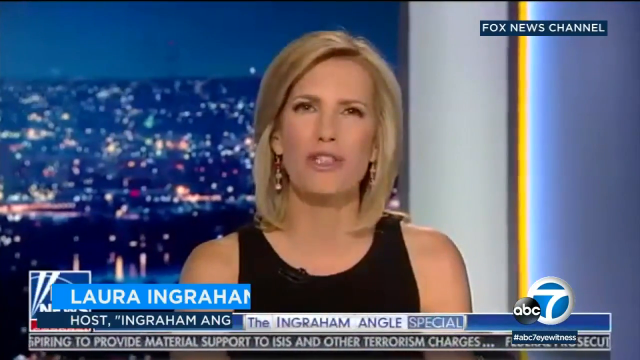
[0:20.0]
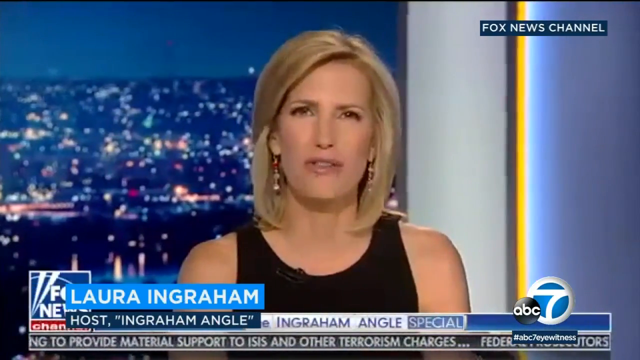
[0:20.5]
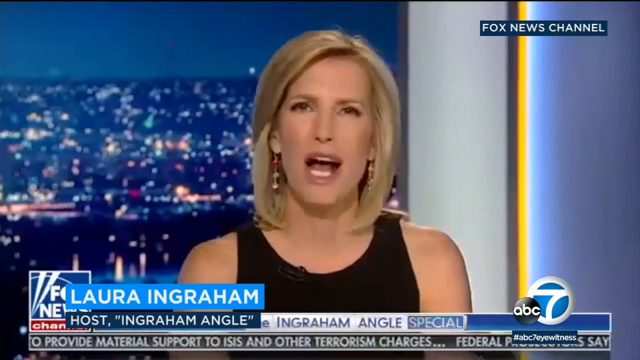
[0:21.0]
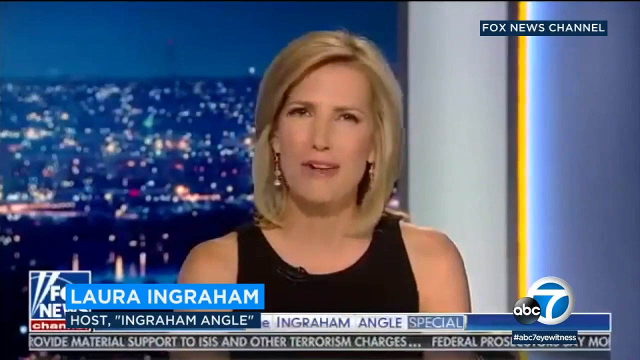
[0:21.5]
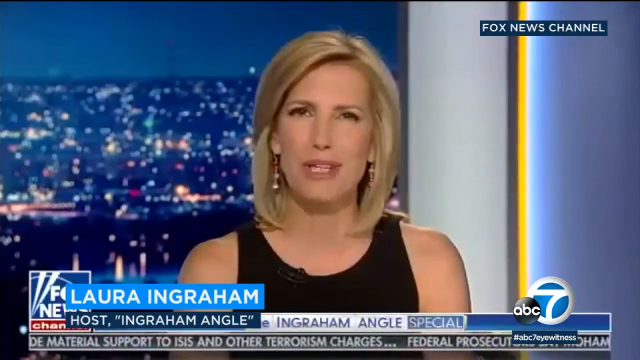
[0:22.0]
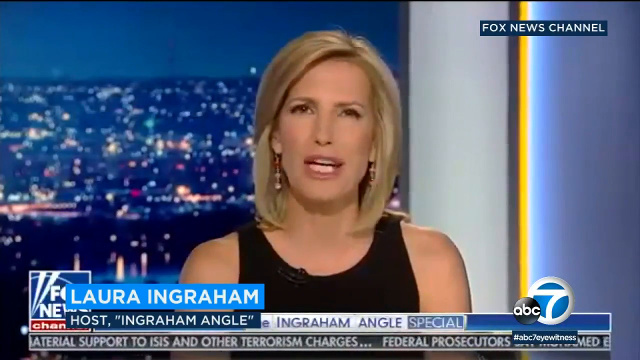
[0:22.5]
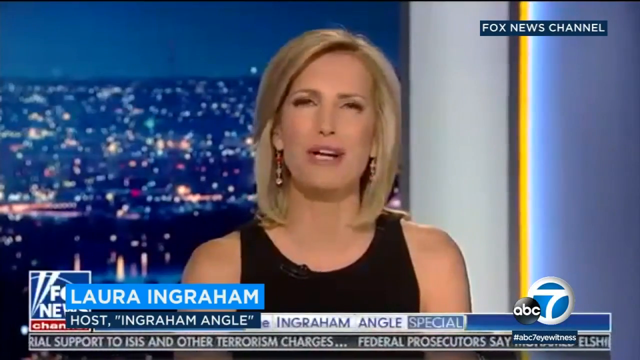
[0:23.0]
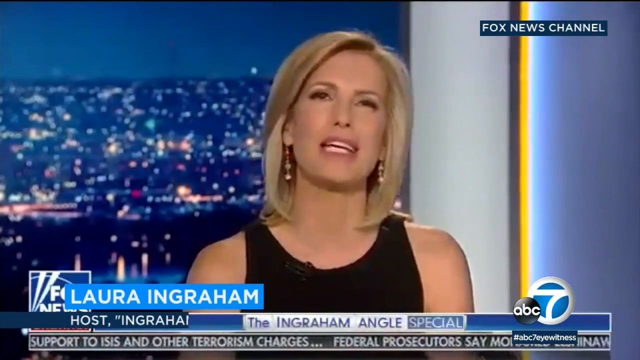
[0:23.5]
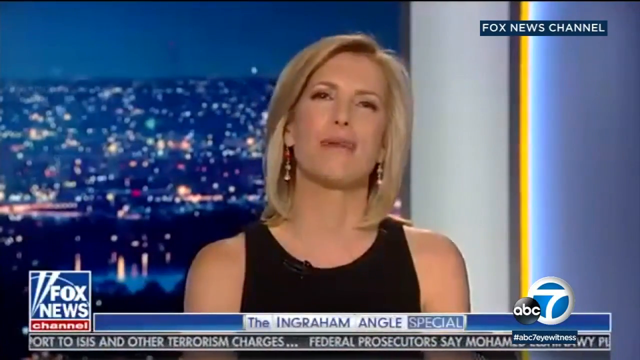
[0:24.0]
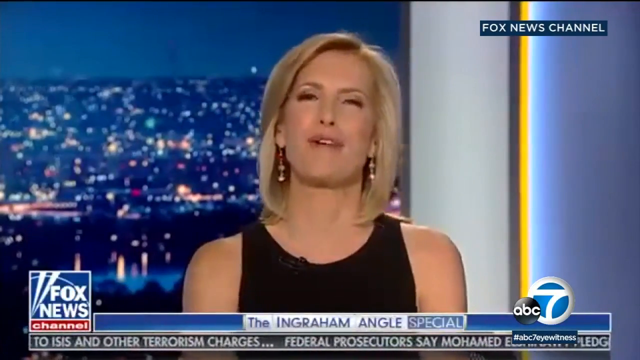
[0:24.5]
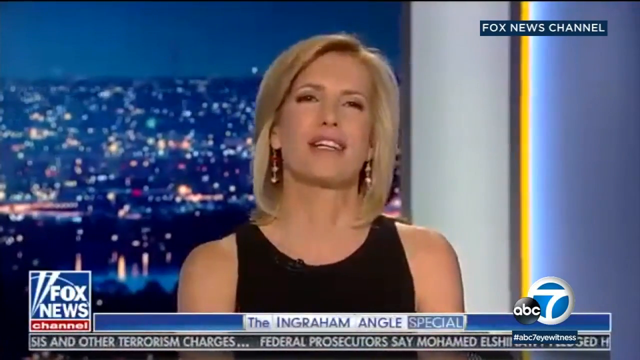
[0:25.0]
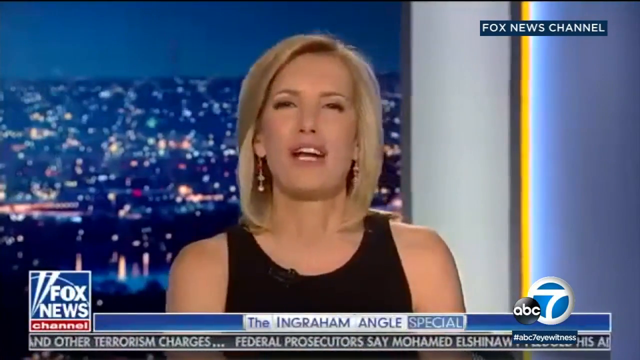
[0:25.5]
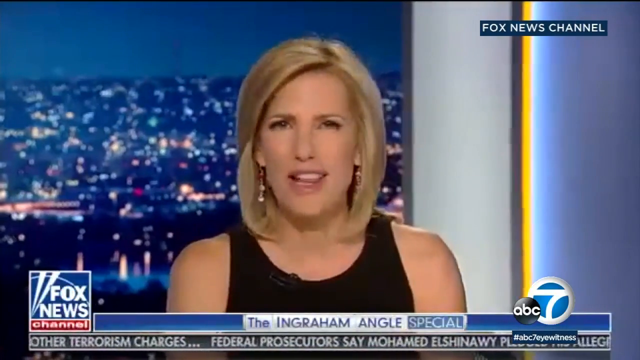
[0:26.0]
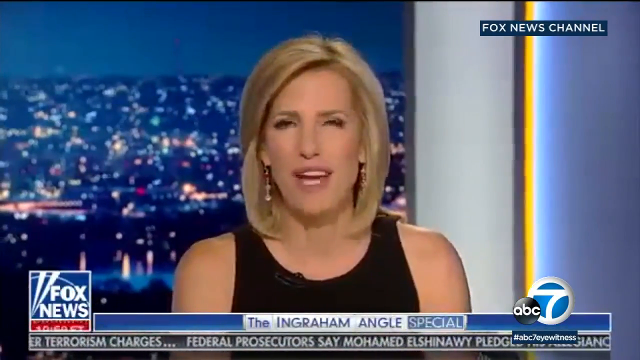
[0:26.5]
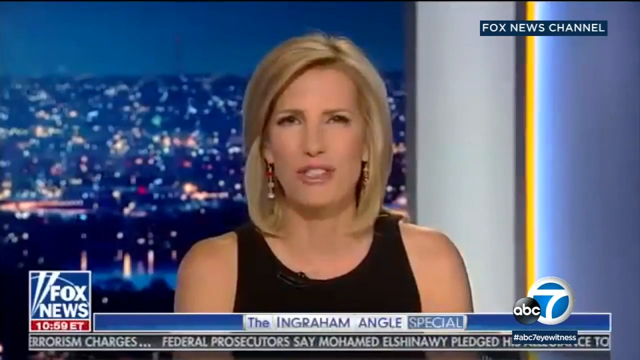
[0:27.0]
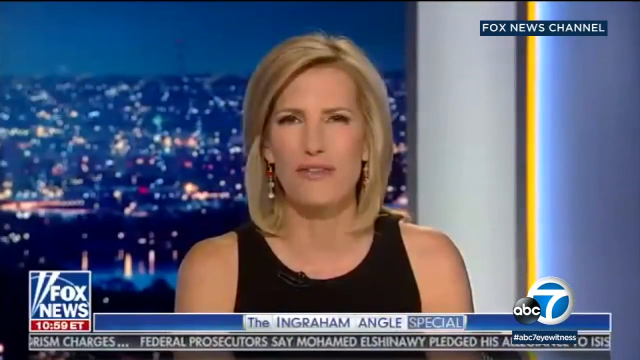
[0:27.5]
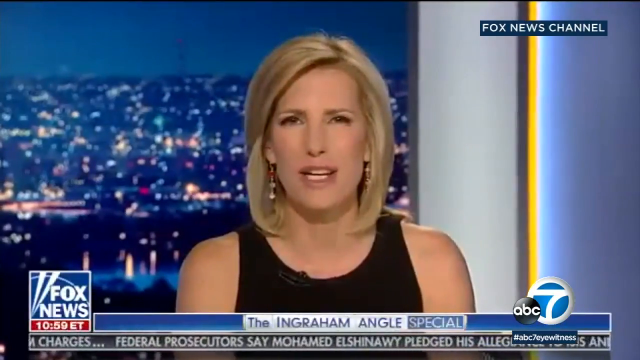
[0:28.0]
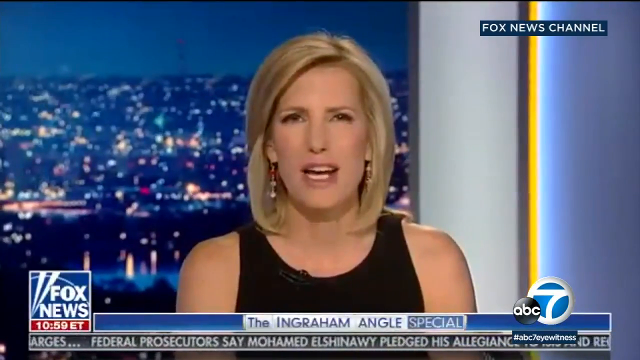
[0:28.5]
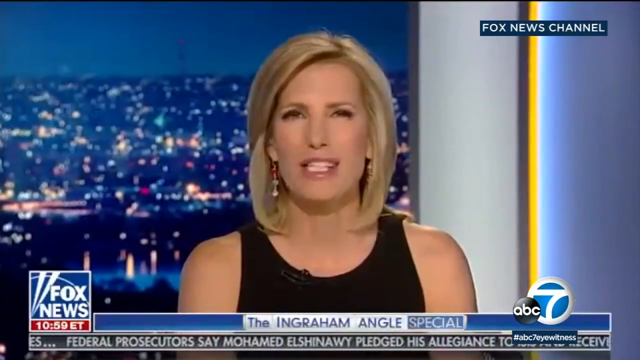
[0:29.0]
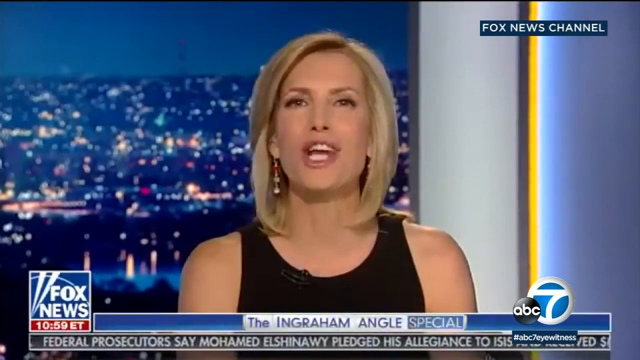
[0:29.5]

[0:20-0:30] A woman in a black dress with blonde hair sits on a chair. She is Laura Ingraham, the host, presenting on the Fox News Channel. There is a big TV screen, and it looks like it is night. On her left-hand side there is a long yellow pipe. She looks about 32 years old, is white, and wears earrings. She is reporting the news on TV.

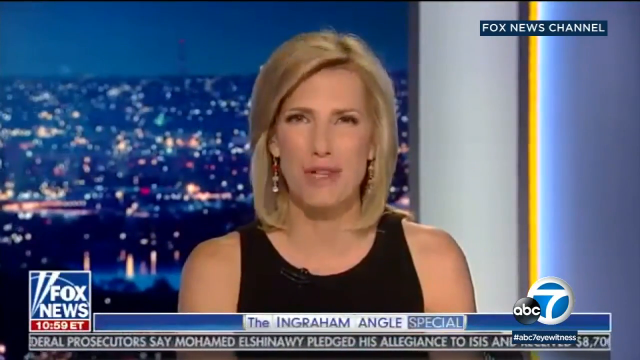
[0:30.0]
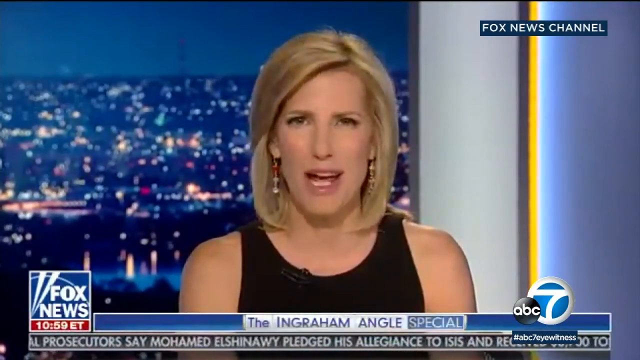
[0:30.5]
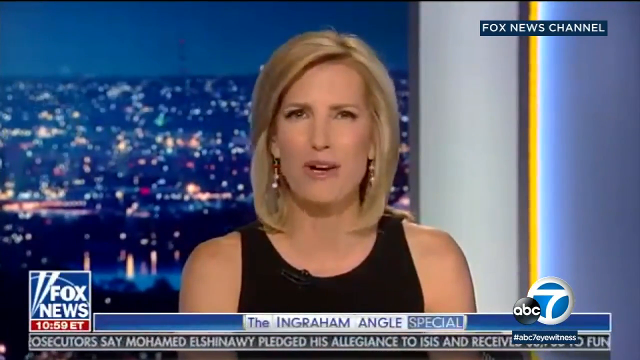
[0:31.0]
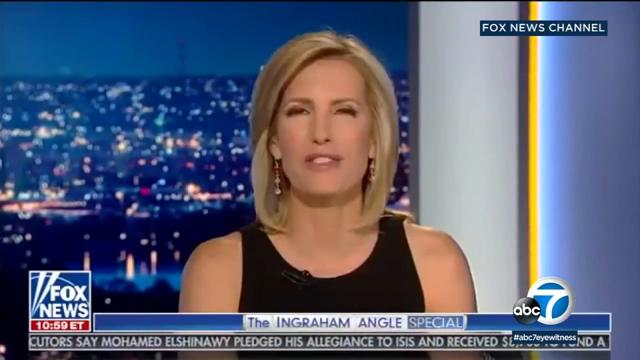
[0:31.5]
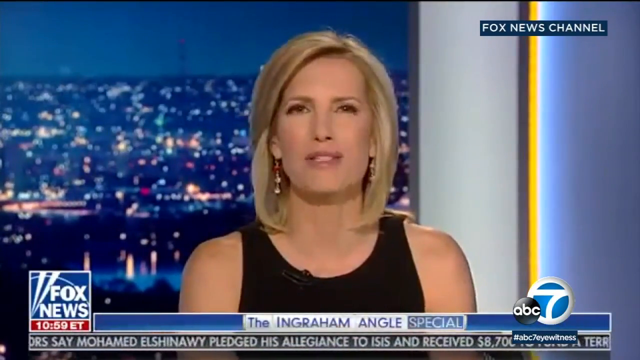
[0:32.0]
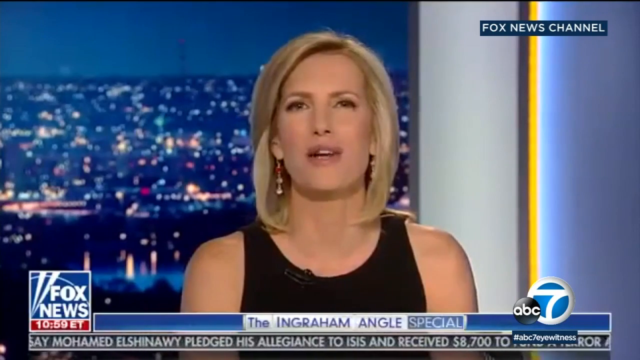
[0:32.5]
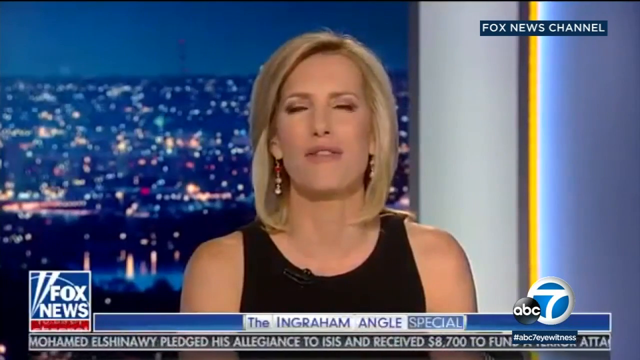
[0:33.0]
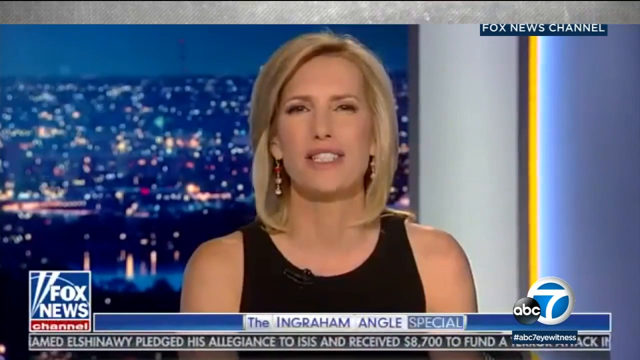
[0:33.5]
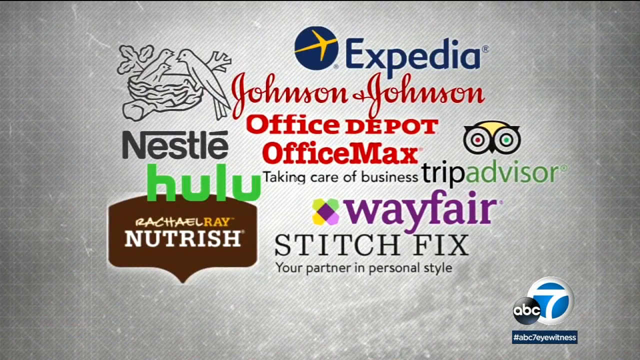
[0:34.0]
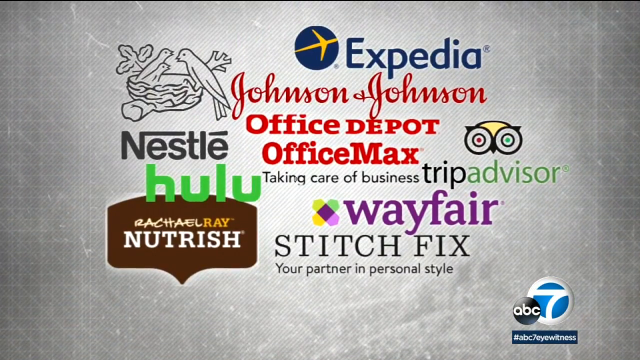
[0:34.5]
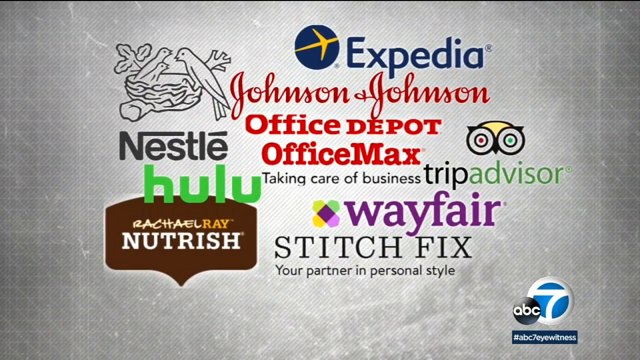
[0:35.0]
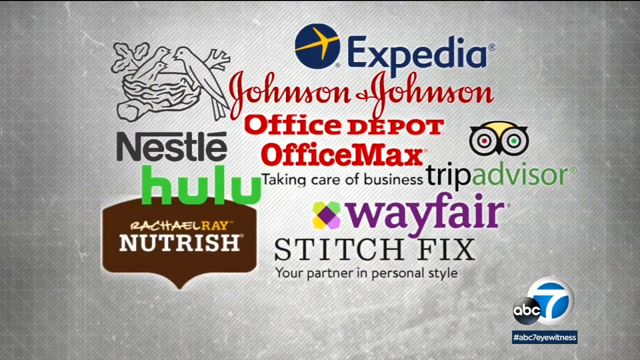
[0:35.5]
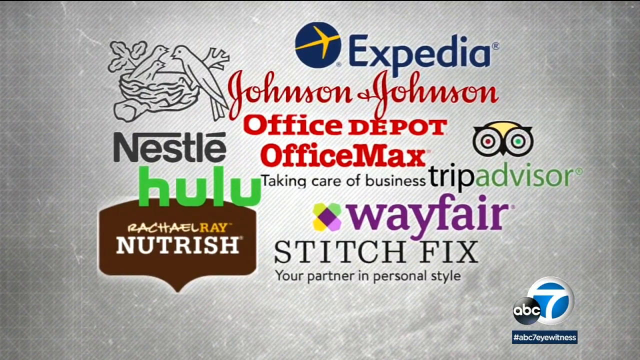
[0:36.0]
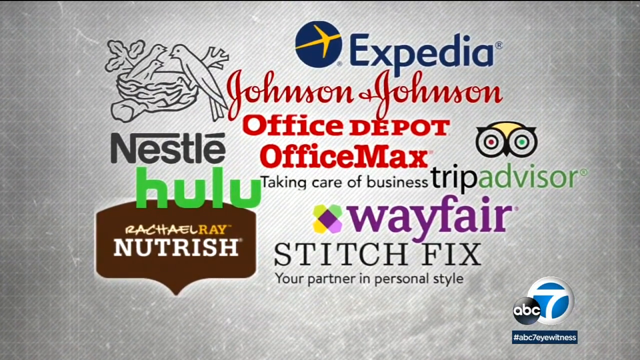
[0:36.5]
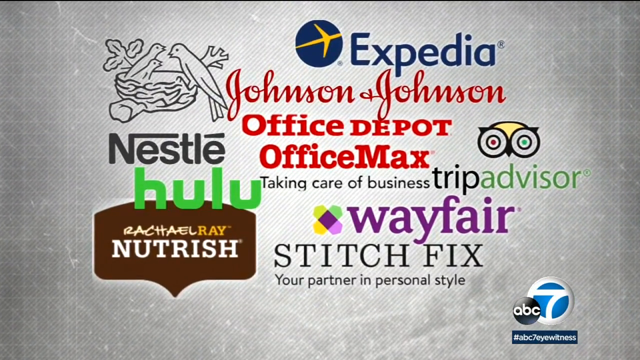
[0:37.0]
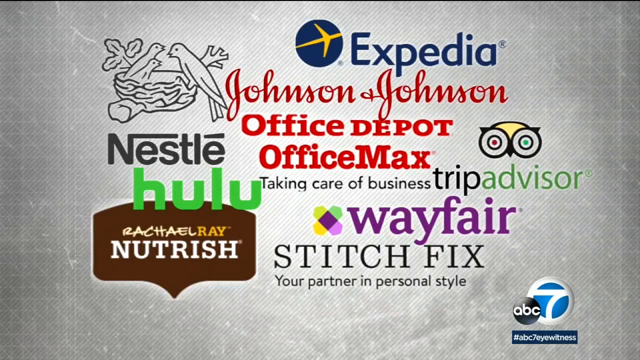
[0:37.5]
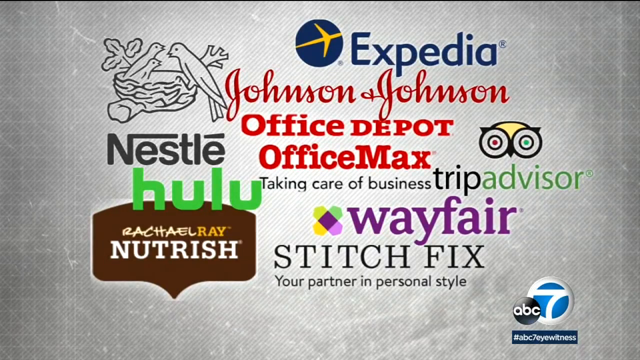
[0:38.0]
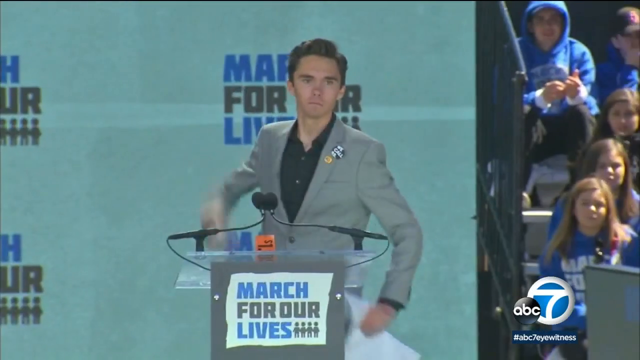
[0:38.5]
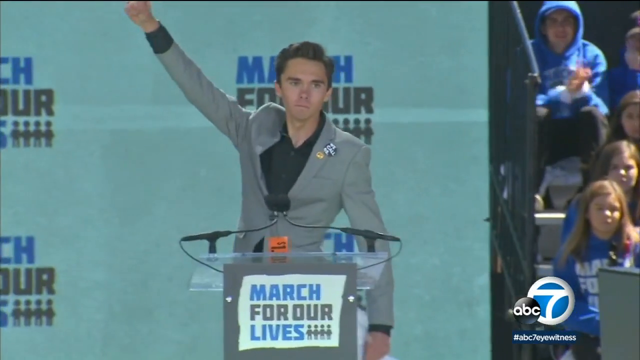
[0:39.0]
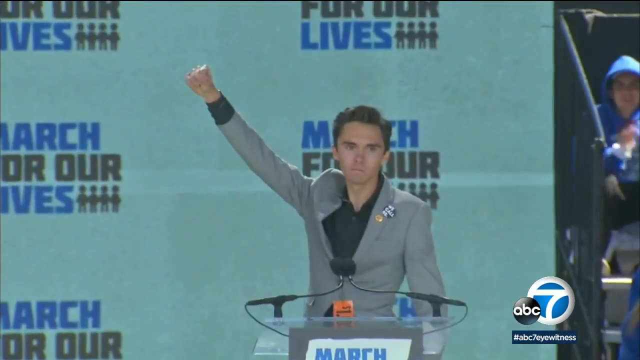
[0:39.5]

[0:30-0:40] Laura Ingraham, in a black dress with blonde hair and earrings, is shown again presenting. Next, a series of logos appears: a Nestle logo with "Nestle" written, an Expedia logo, a Johnson & Johnson logo, names including Office Max with text reading "taking care of the business", a TripAdvisor logo, a Wayfair logo, a Stitch Fix logo with "your partner in personal style", a Hulu logo, and a last logo that says "Nutrition".